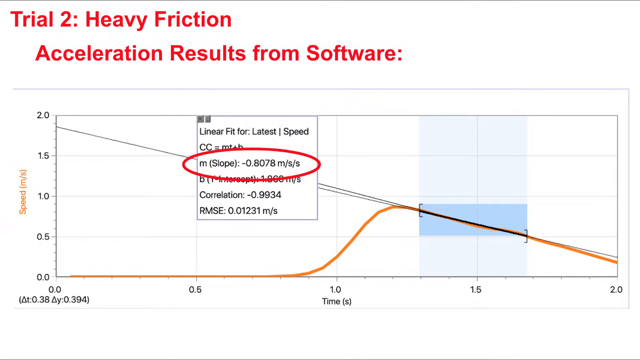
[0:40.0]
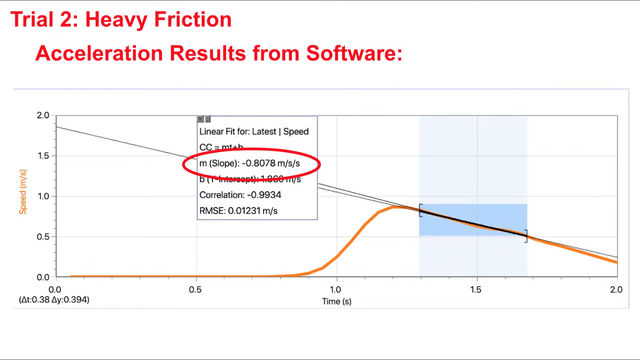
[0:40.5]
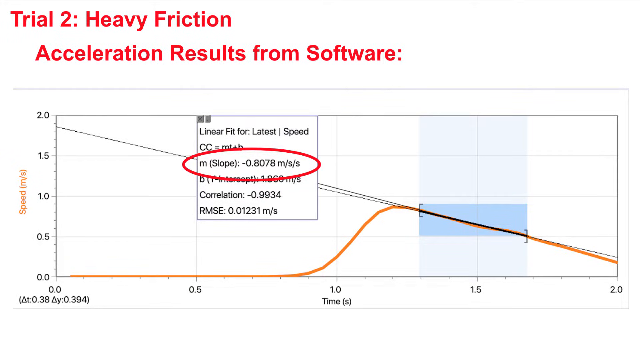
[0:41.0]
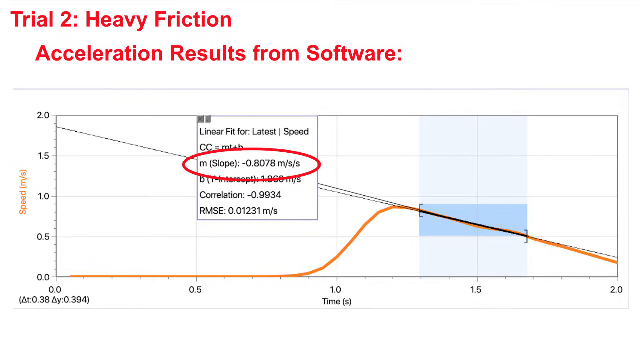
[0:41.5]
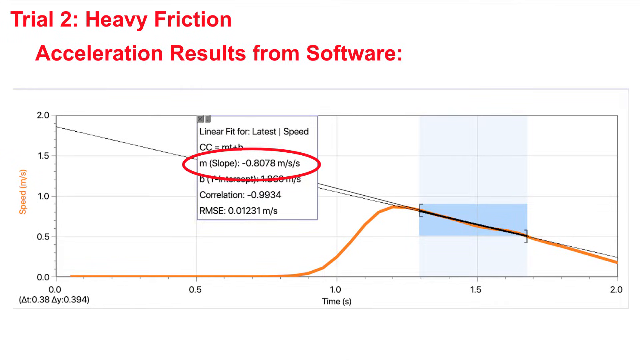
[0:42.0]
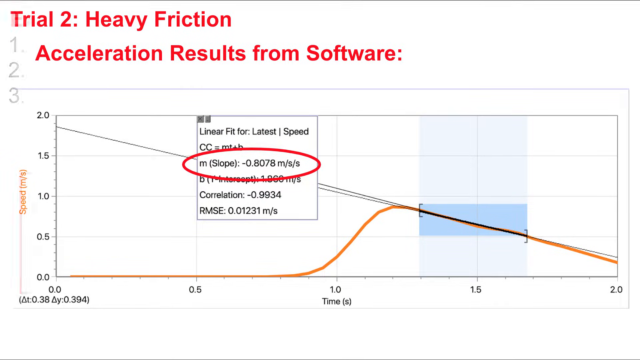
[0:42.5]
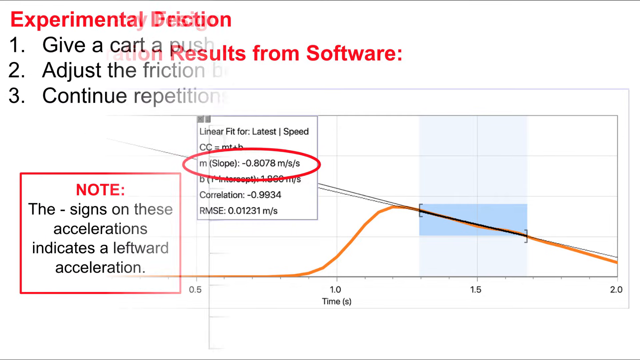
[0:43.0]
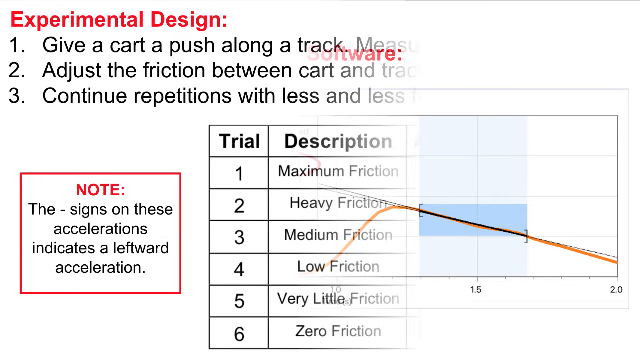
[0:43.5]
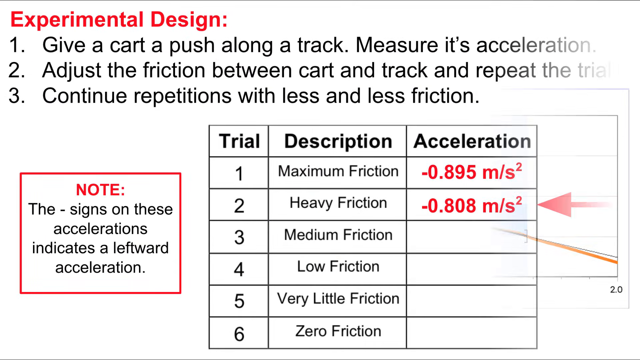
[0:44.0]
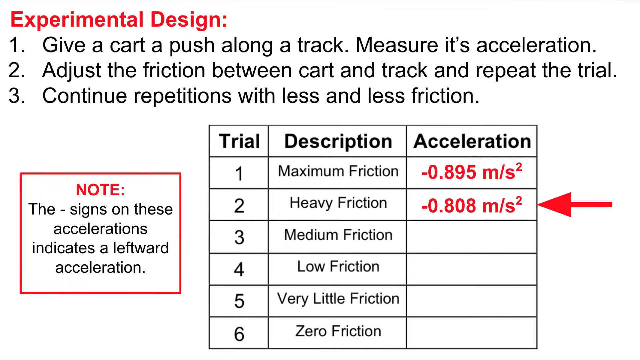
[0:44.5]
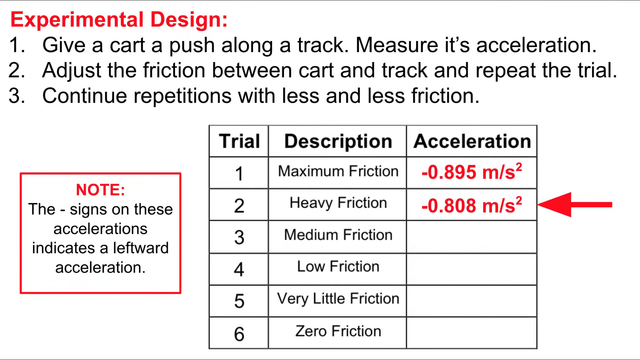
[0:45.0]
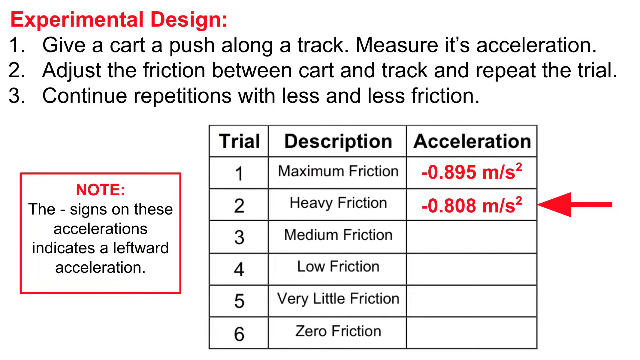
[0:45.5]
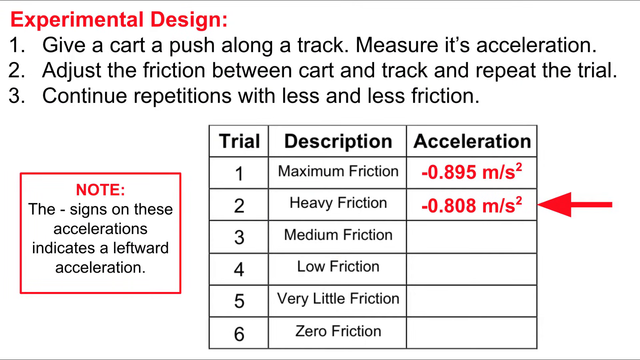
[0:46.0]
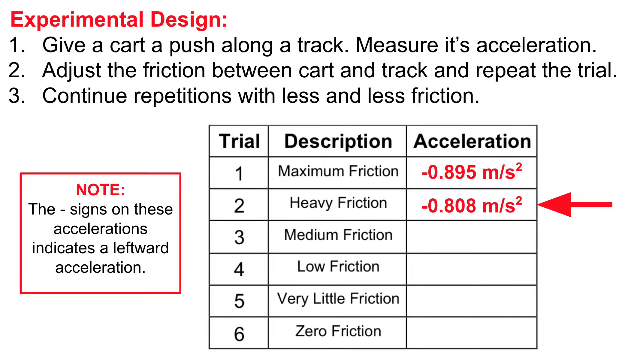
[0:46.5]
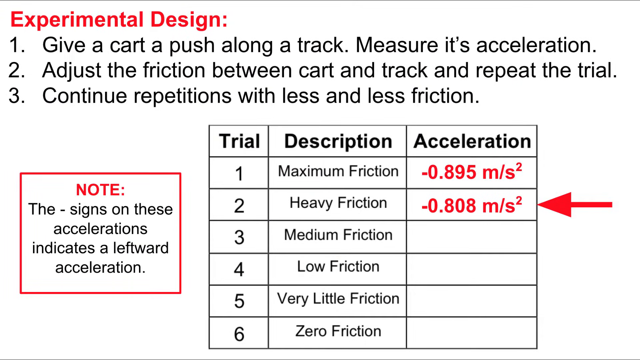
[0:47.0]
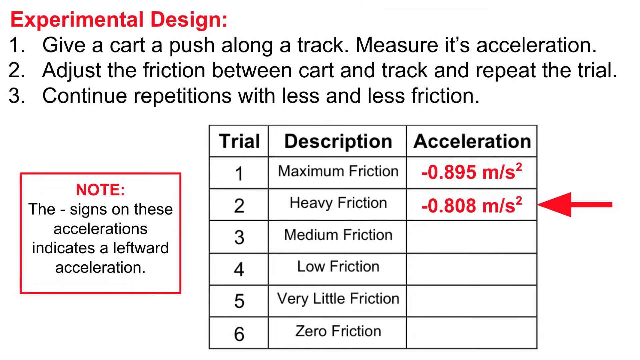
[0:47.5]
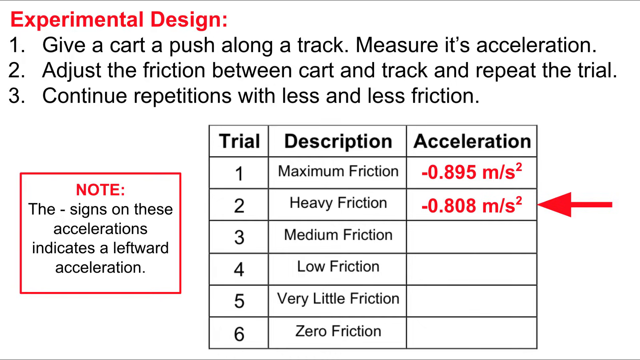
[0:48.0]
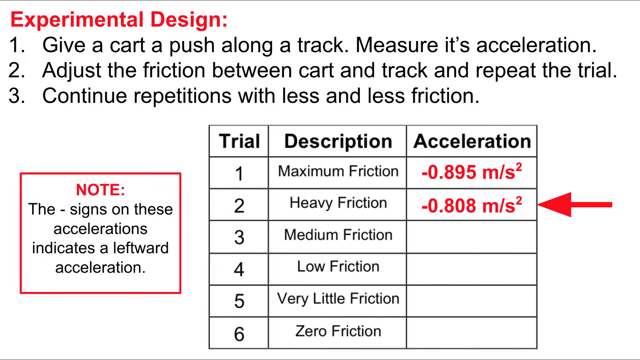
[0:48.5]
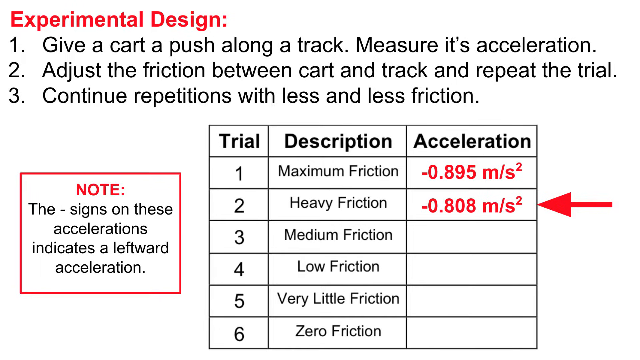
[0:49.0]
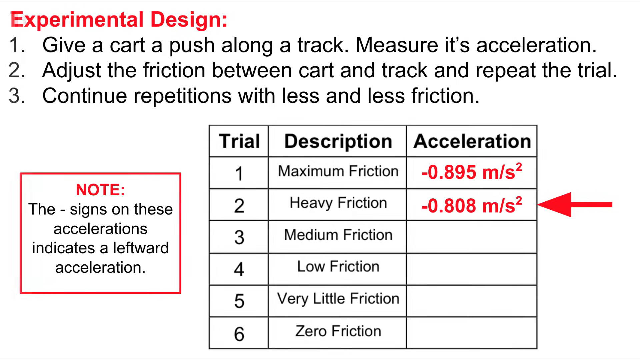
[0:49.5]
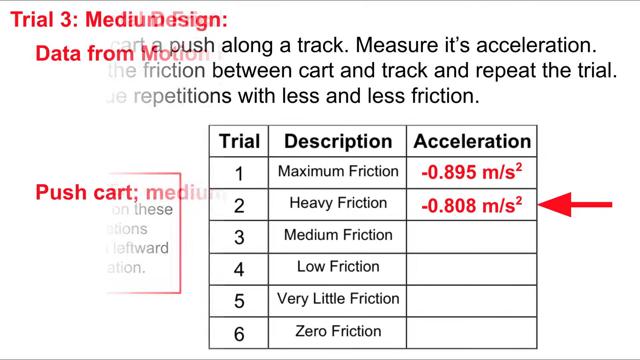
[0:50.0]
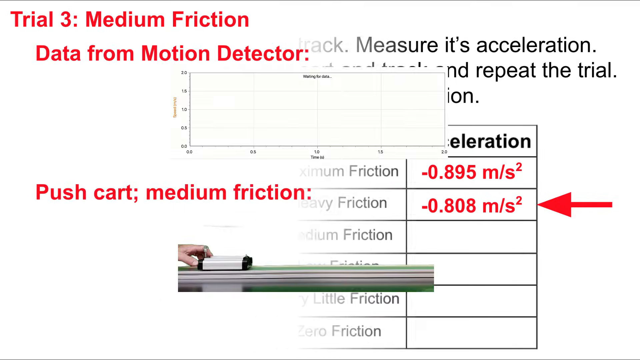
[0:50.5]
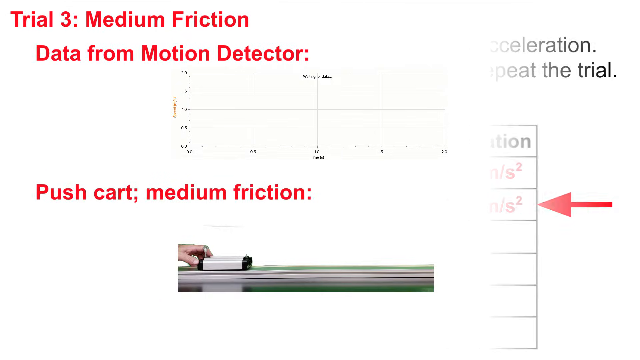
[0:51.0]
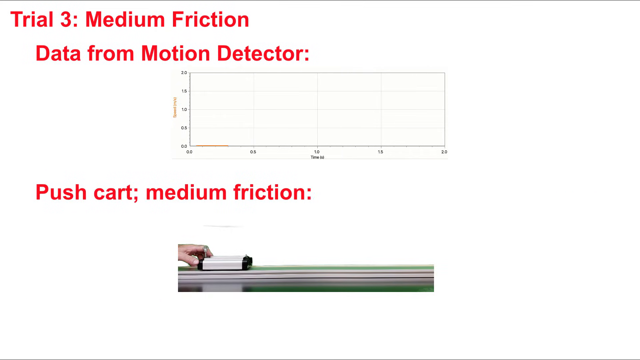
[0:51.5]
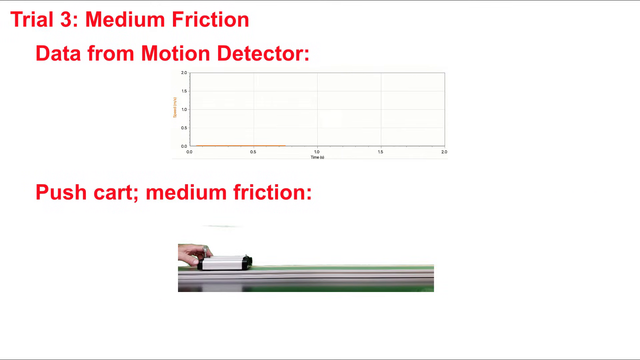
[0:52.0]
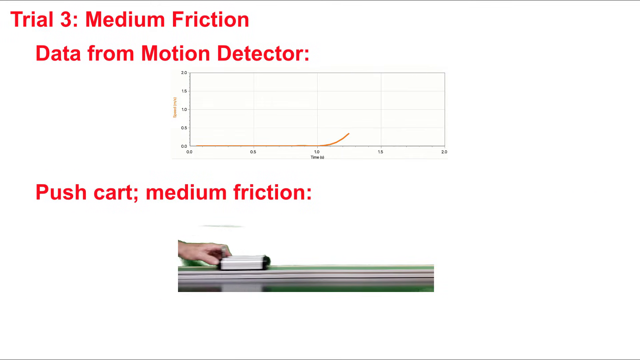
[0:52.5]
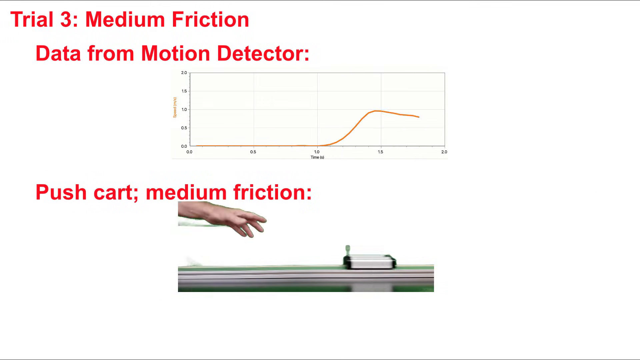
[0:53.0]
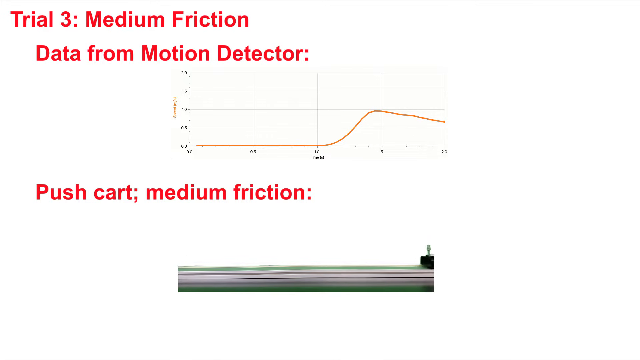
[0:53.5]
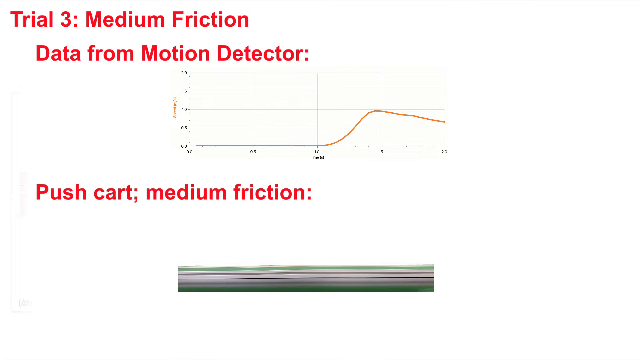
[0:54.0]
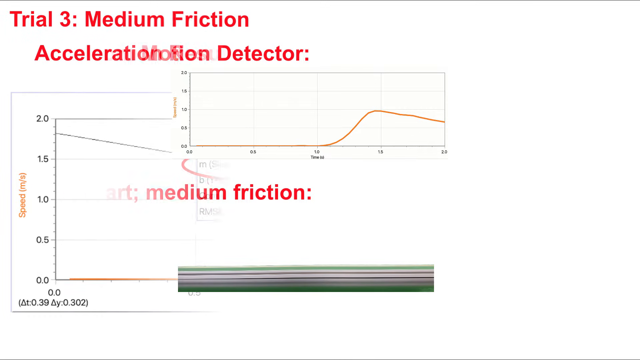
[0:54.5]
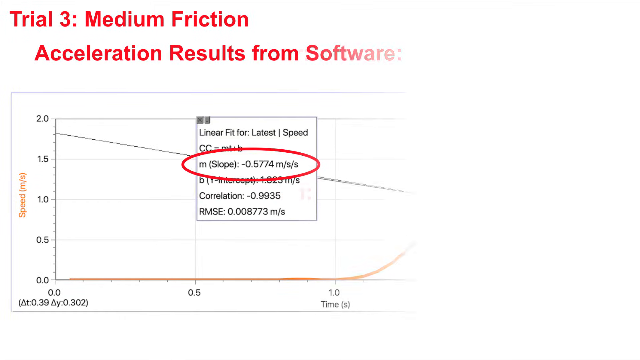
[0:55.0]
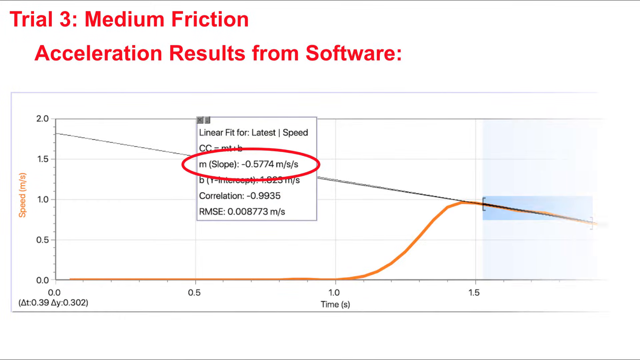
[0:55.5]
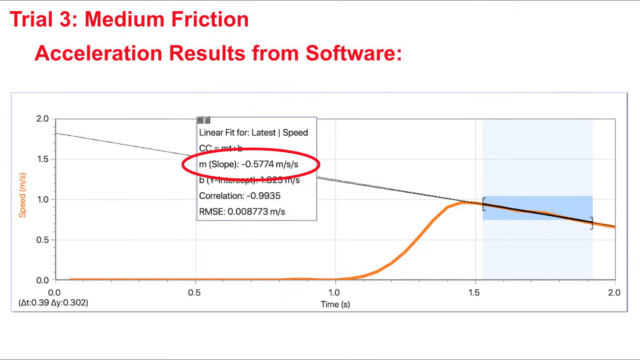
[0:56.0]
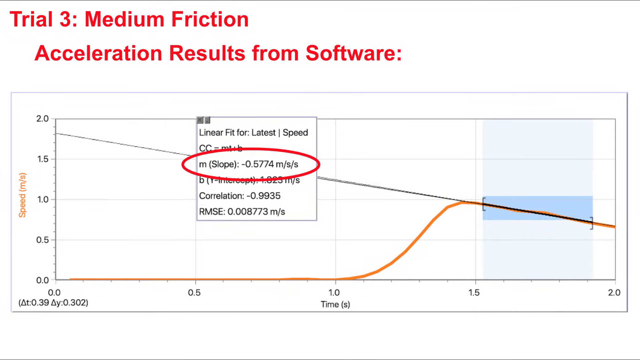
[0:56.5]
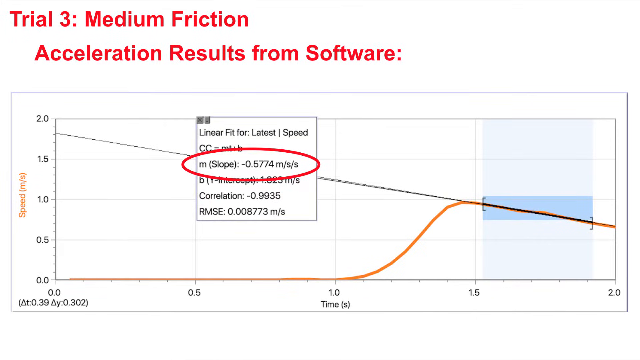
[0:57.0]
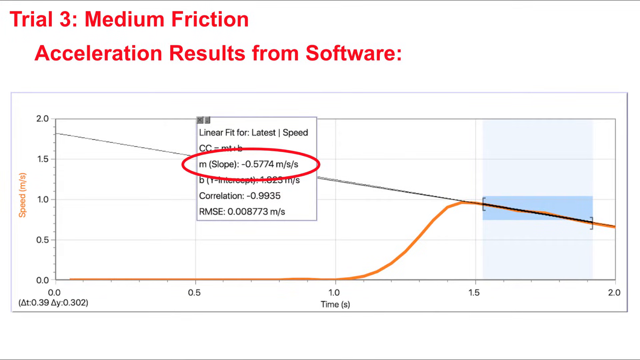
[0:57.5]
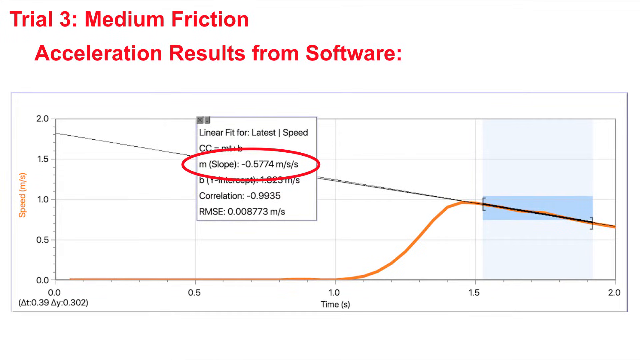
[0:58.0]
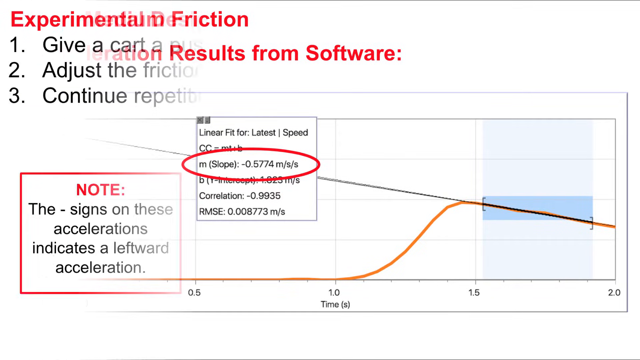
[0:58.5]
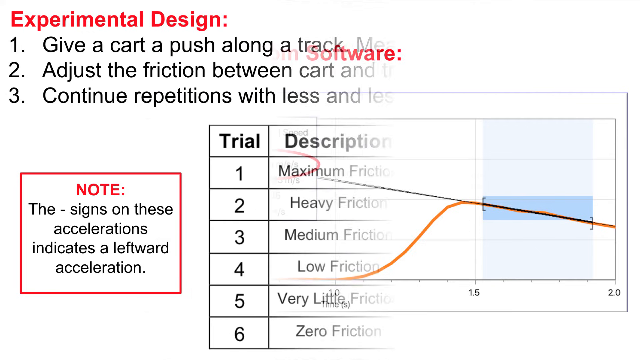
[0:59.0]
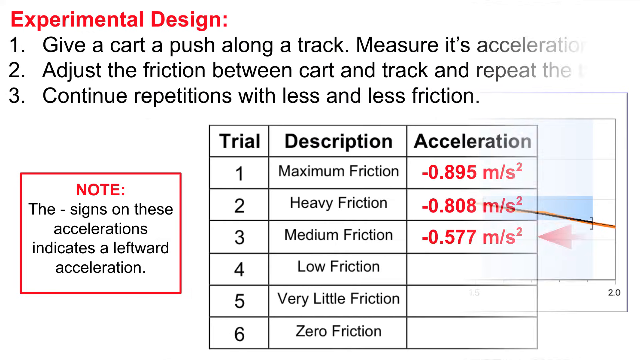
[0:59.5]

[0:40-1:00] The video illustrates how the test is carried out, showing the equipment used, the equipment being pushed, and a graph indicating the forces acting on the push. Results are now shown for trial 1 and trial 2, under maximum friction and heavy friction, and a value of 0.5574 is displayed. The recorded results so far are 0.895 meters per second squared for trial 1, 0.808 meters per second squared for trial 2, and 0.577 meters per second squared for trial 3. The results differ from the first one.